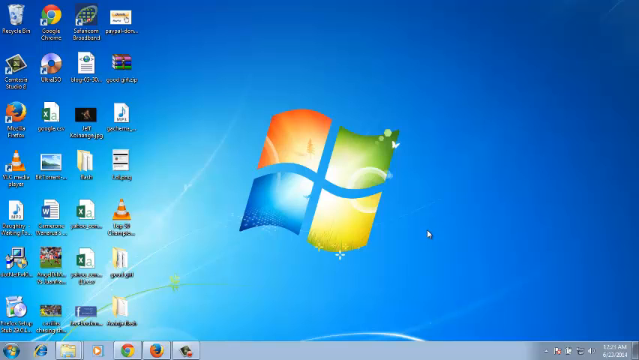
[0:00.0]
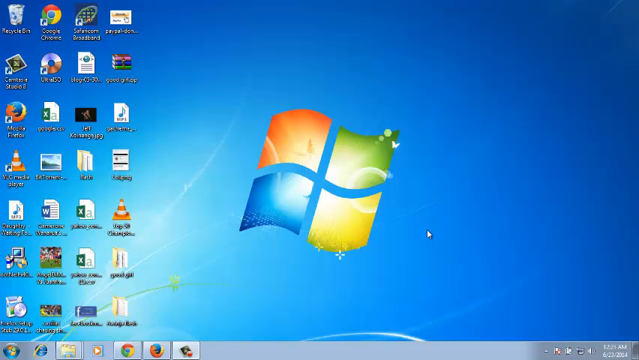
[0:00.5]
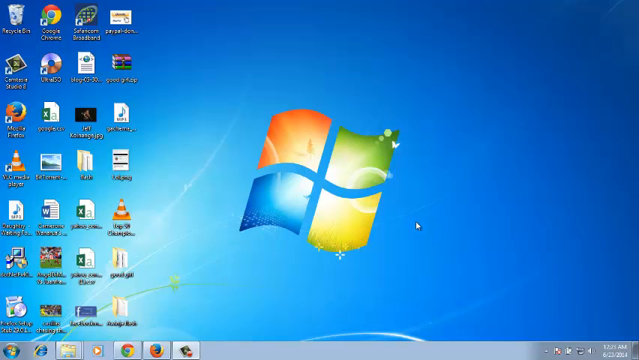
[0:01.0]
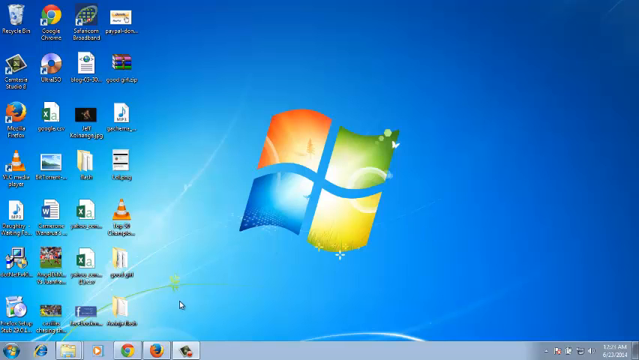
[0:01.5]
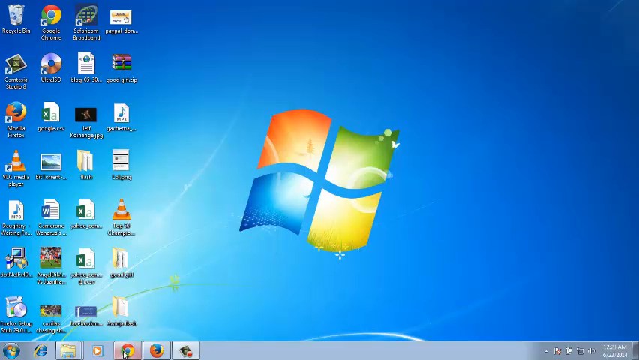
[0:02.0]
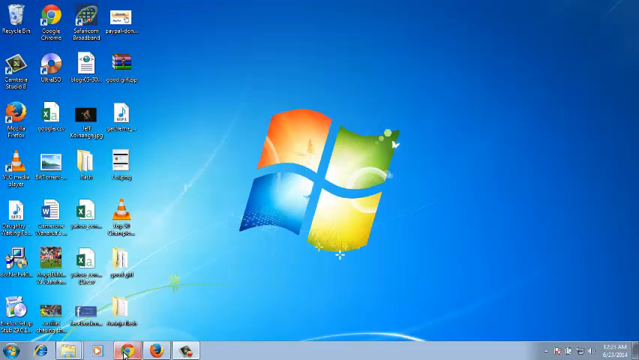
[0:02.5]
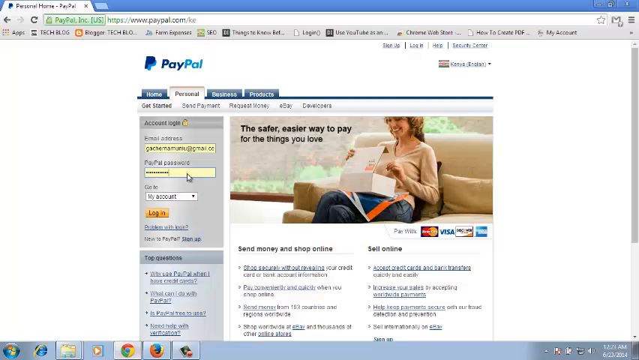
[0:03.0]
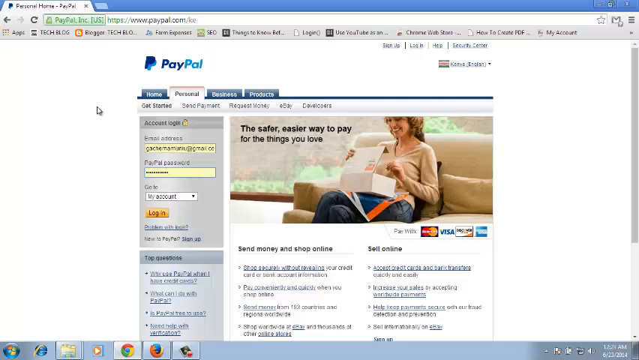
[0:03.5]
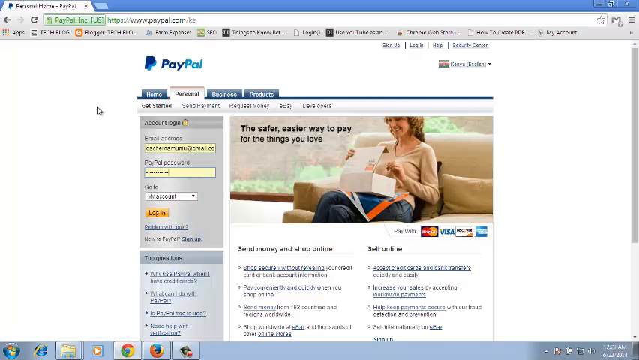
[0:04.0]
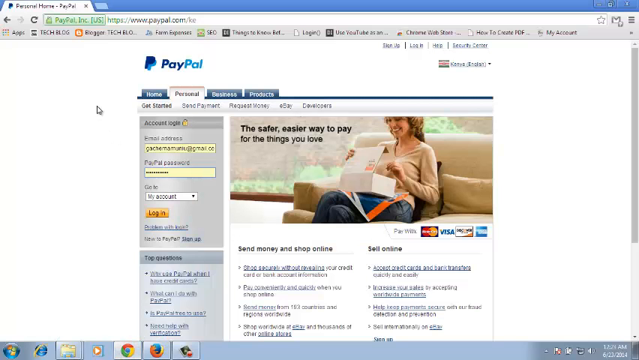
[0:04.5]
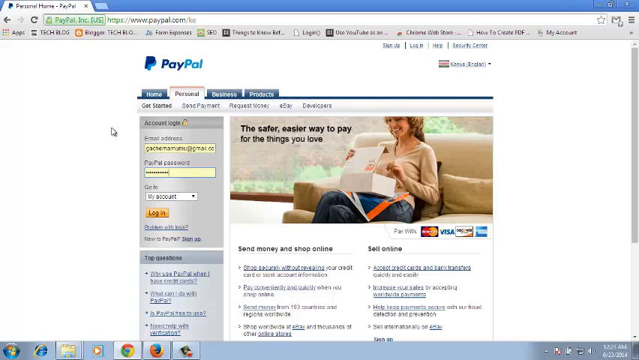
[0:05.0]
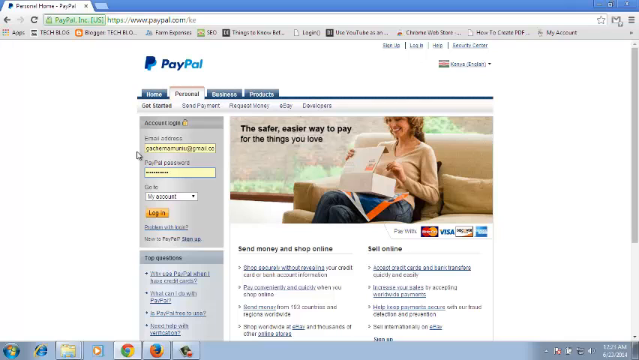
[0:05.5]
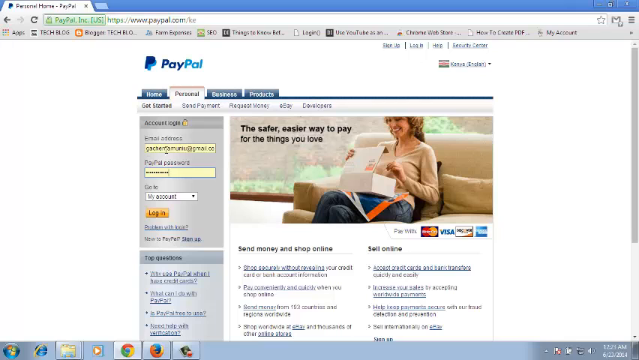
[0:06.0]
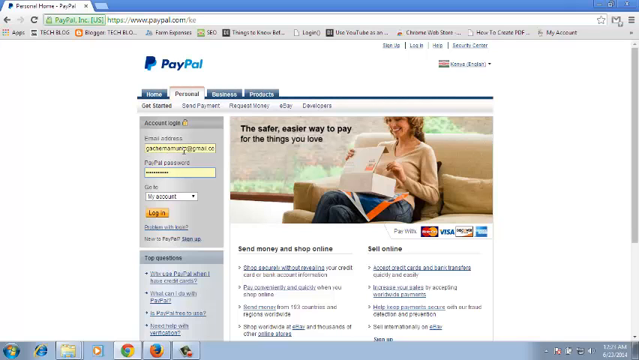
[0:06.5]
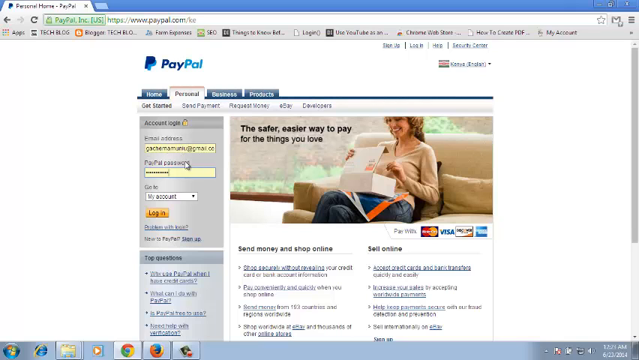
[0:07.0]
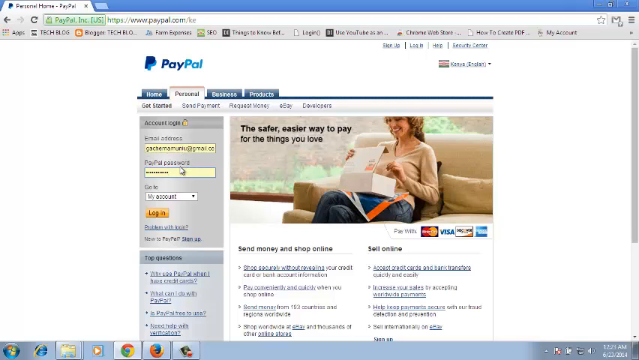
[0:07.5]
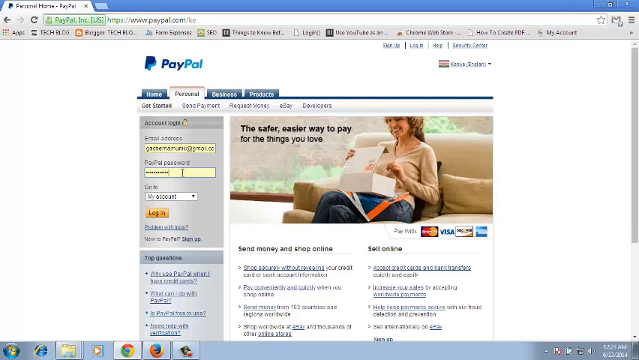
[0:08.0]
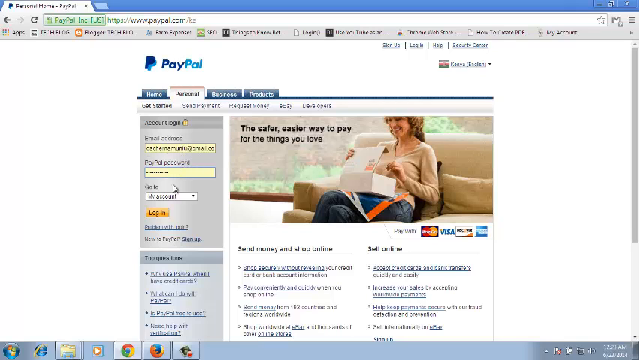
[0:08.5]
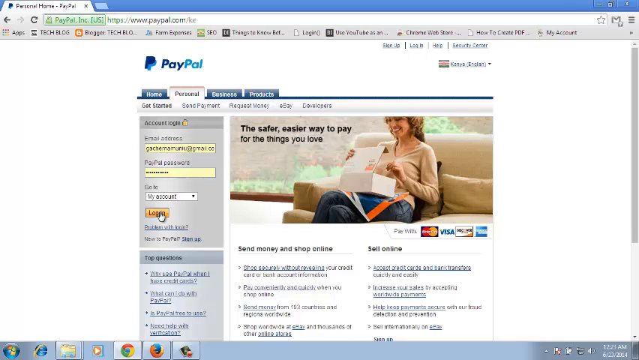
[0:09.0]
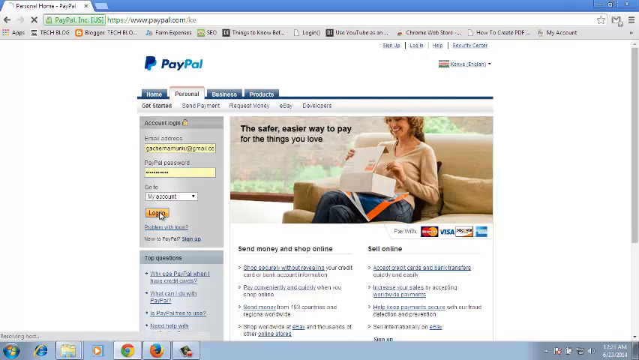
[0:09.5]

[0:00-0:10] A computer screen shows the Windows logo, with a whole bunch of icons on the left side. A cursor moves around, and the person seems to click on a browser. The PayPal page appears and the cursor moves around it. The page shows an image of a woman sitting on a couch opening a white box, and on the left side there is something that kind of looks like a login. The person clicks the button to log into the PayPal website.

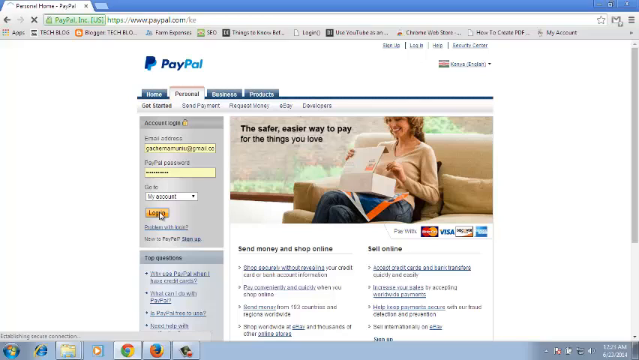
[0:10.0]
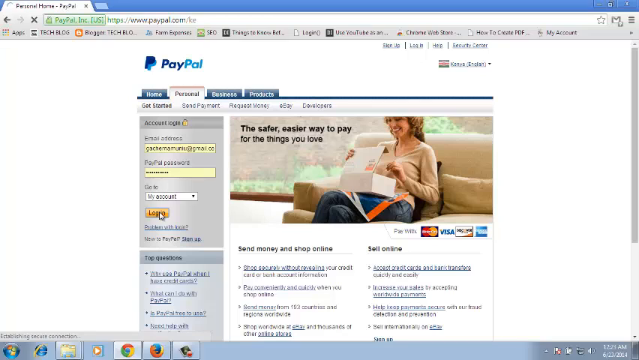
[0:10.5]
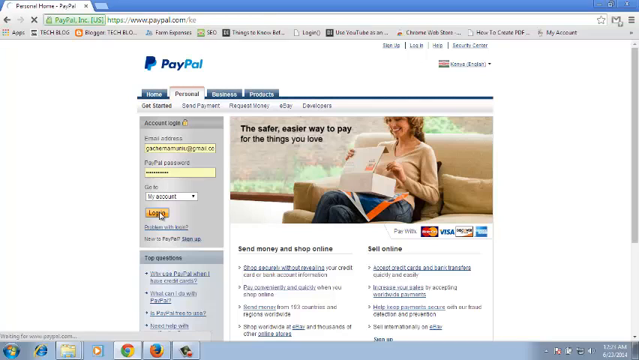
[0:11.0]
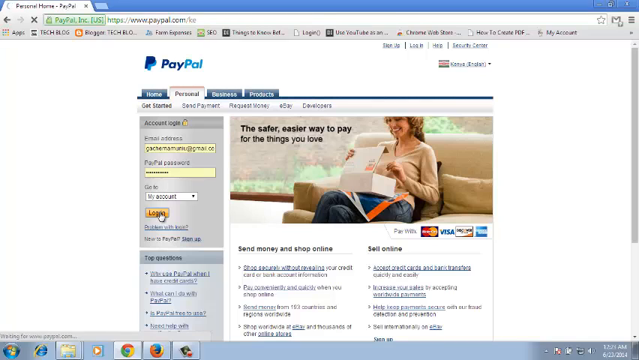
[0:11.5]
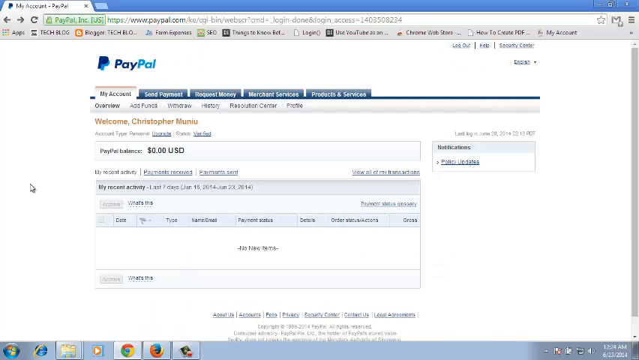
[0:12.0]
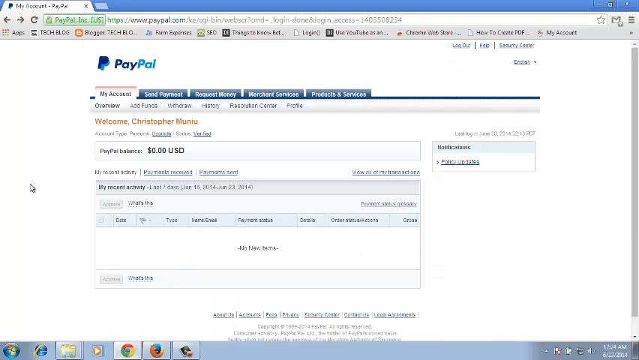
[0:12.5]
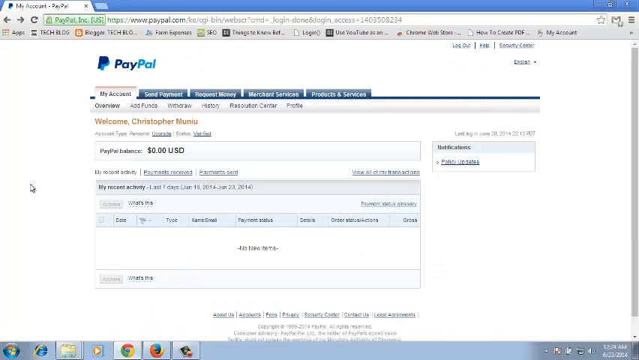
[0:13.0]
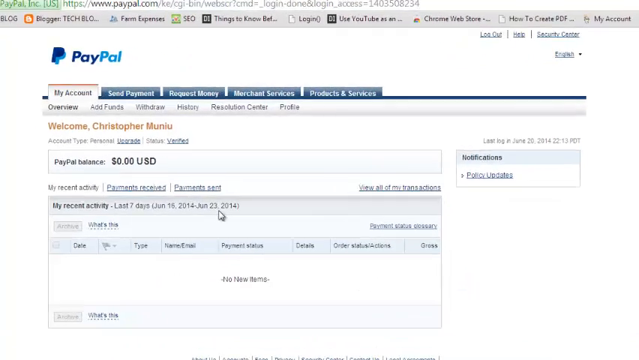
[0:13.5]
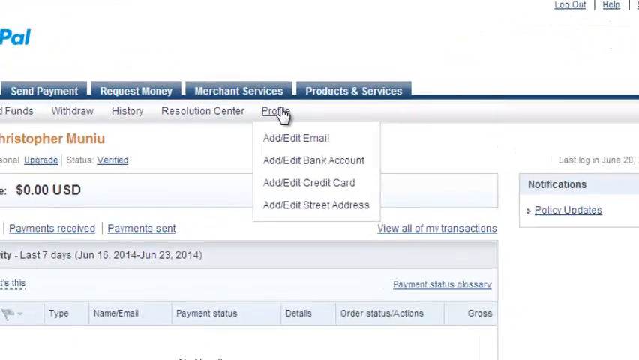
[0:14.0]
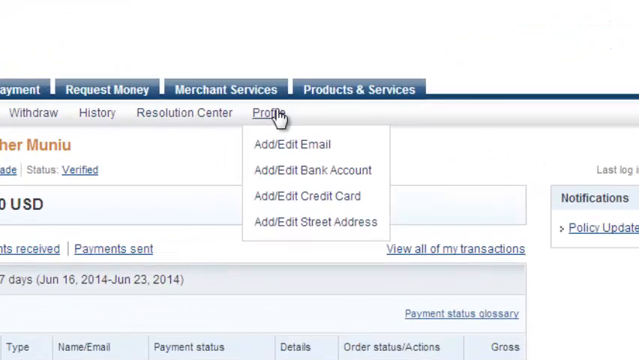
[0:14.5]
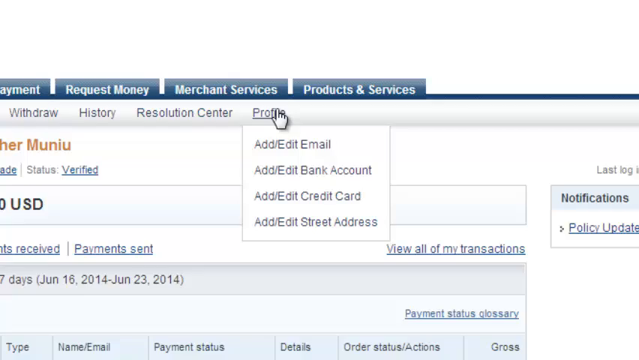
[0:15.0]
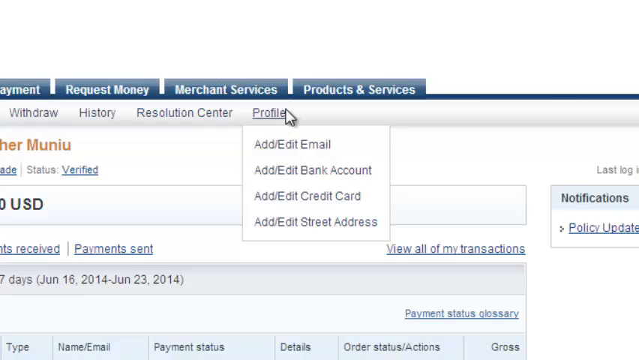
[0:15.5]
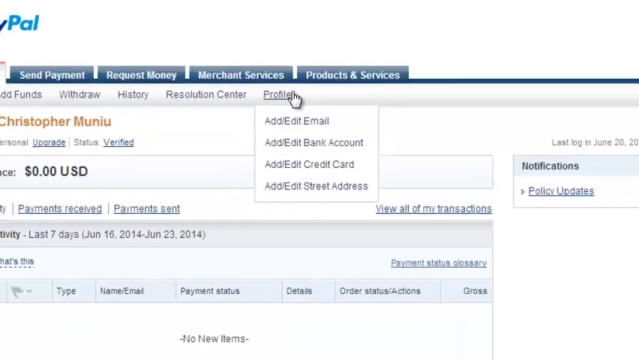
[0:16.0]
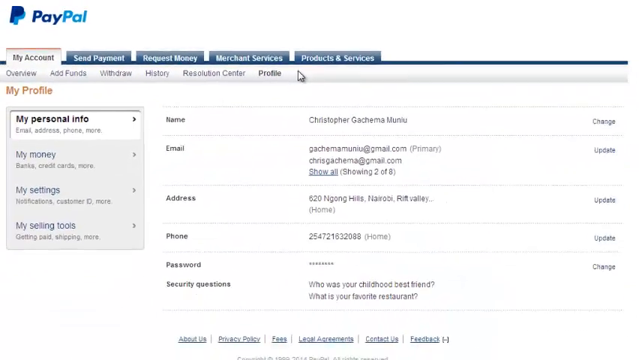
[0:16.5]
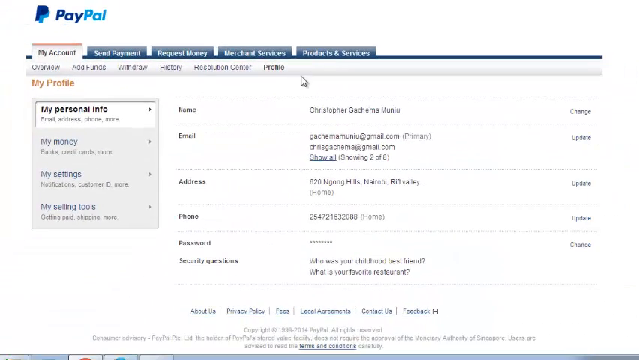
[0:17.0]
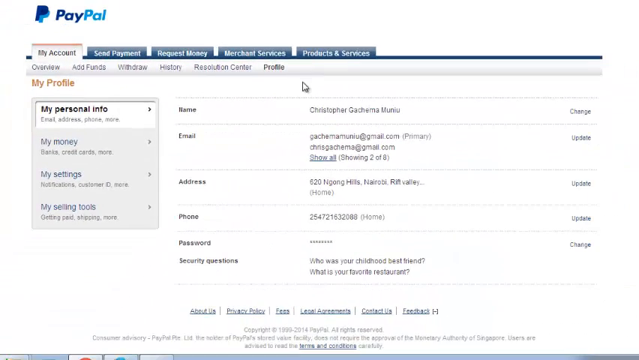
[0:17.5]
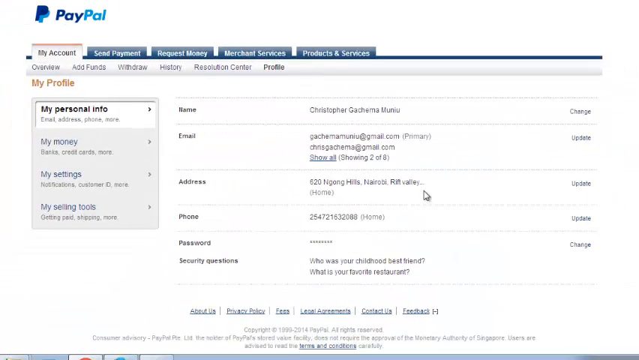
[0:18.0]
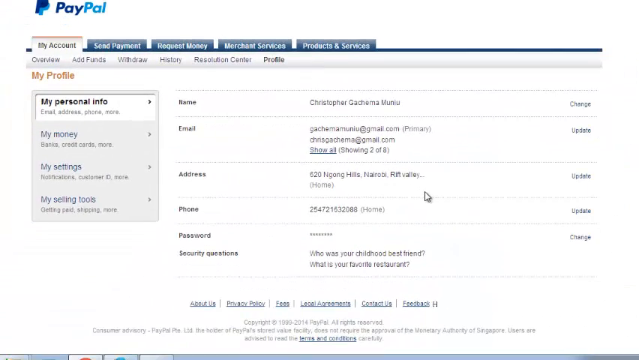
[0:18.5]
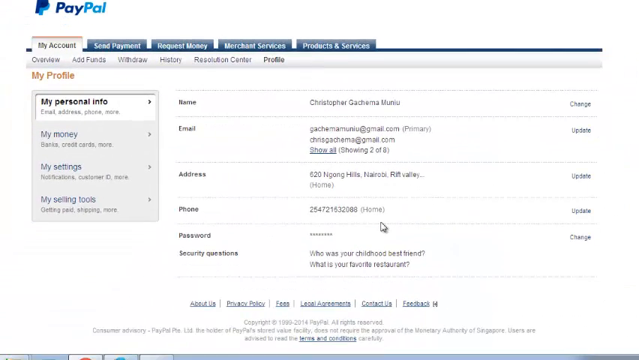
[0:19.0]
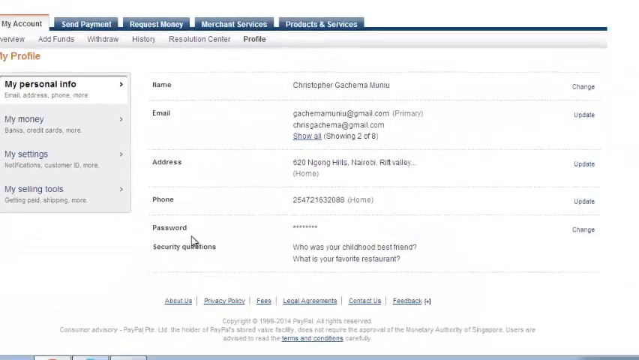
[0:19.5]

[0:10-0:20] On the PayPal website, the person moves the cursor around on what seems to be the home page with the login, and is about to click the yellow login button. The view then goes to the next page within PayPal. The camera zooms in on "profile" with the cursor on it, and the person seems to right-click on it, making a menu pop up. They click out of it and the menu disappears, and a list seems to appear underneath. The person points the cursor at one part of the list; as they do, "change" appears on the right side, and they click on it.